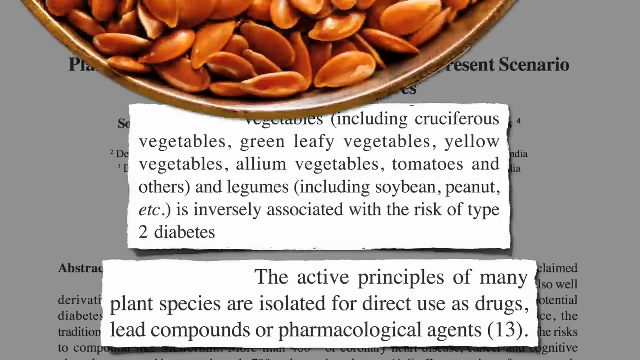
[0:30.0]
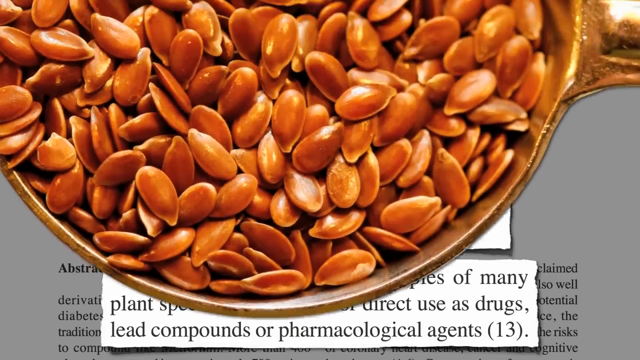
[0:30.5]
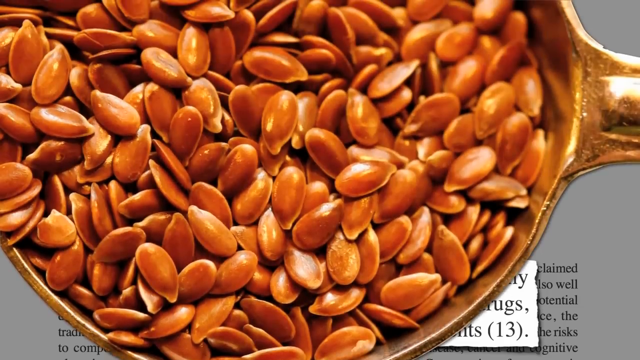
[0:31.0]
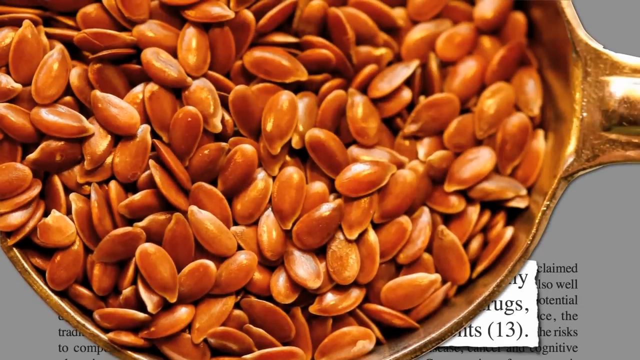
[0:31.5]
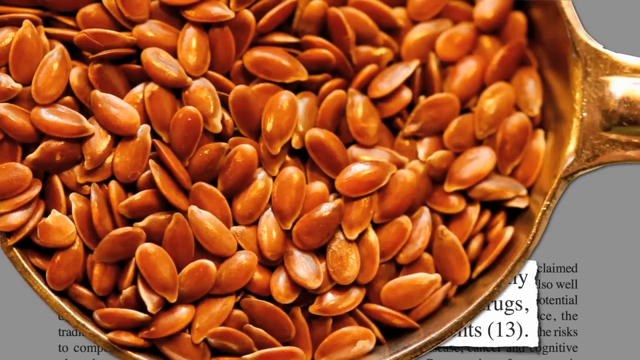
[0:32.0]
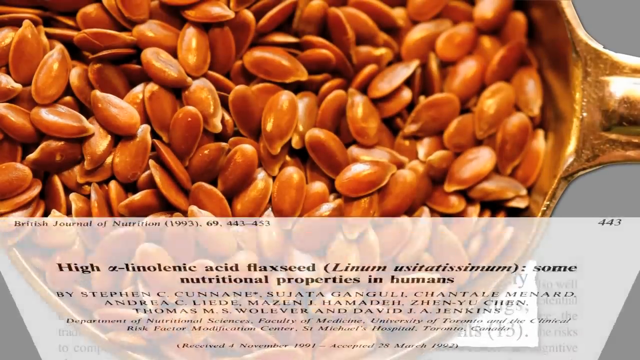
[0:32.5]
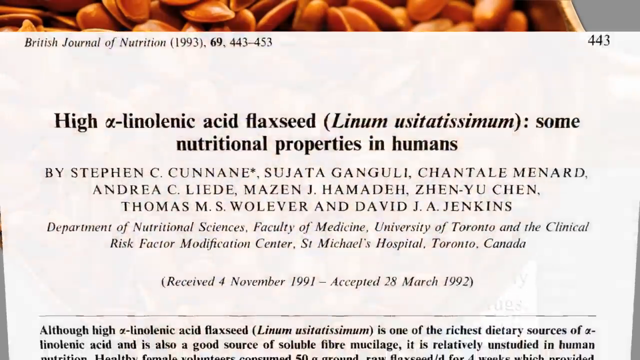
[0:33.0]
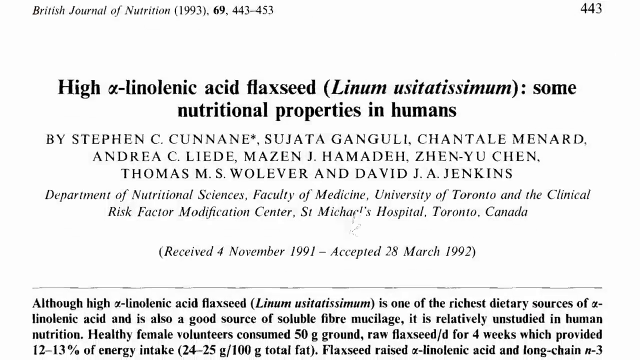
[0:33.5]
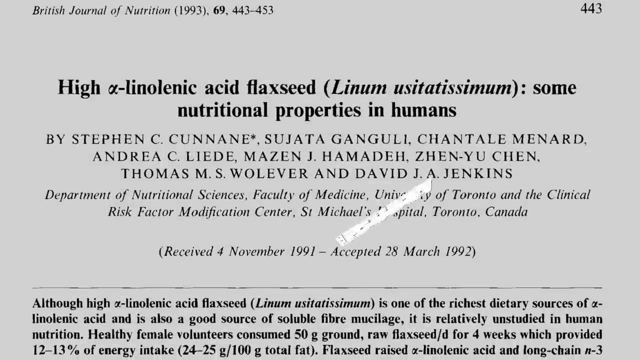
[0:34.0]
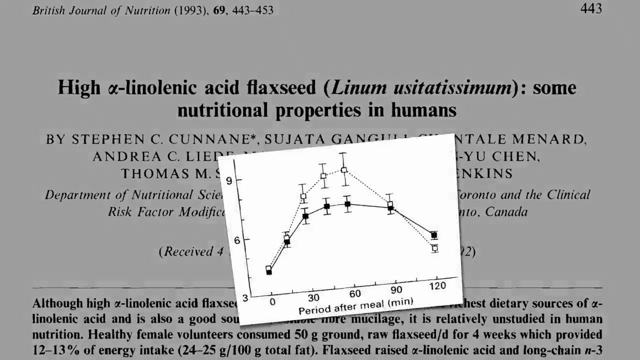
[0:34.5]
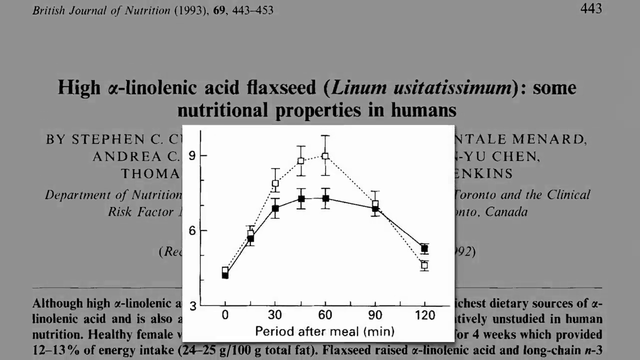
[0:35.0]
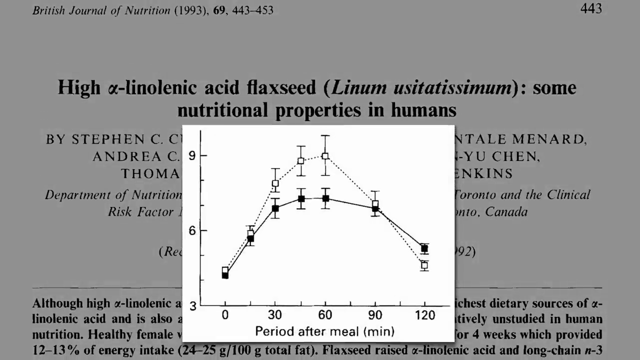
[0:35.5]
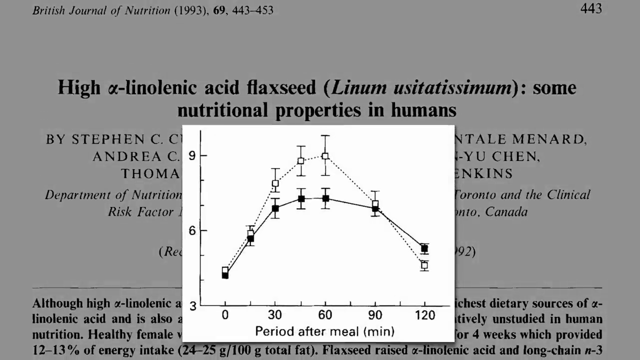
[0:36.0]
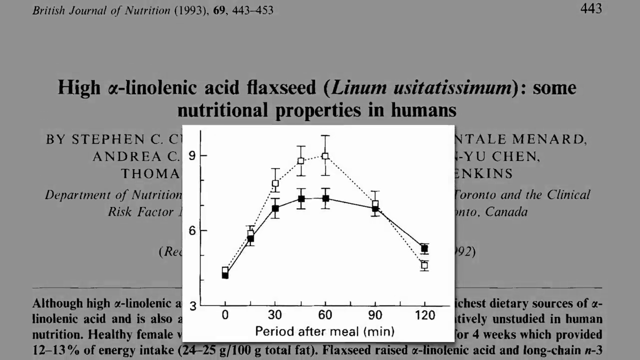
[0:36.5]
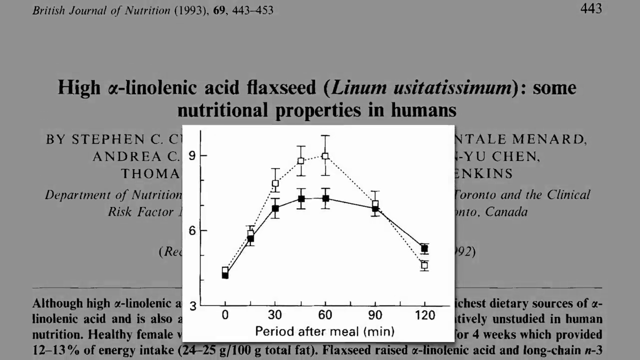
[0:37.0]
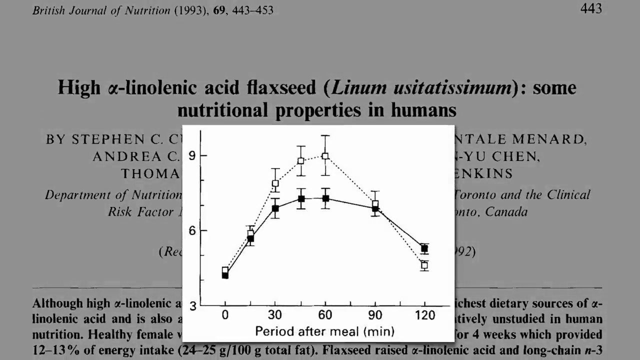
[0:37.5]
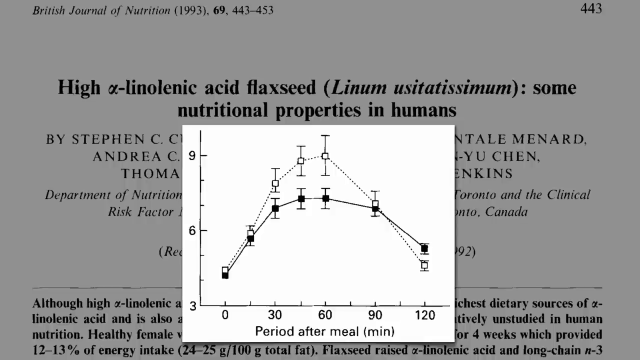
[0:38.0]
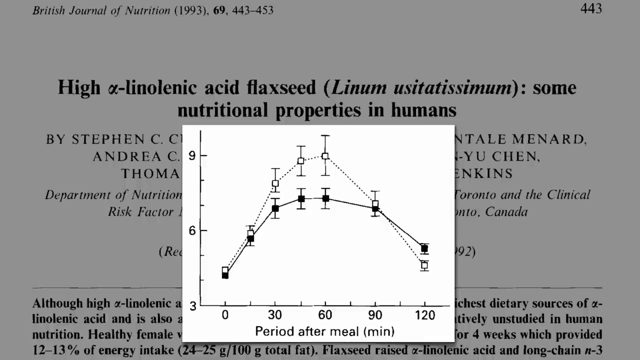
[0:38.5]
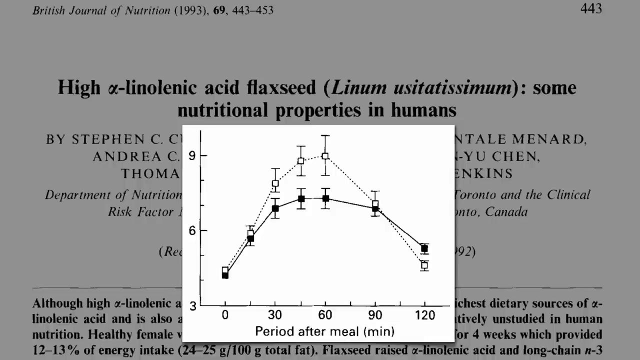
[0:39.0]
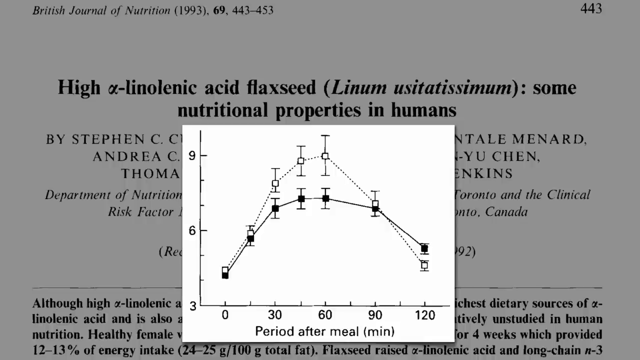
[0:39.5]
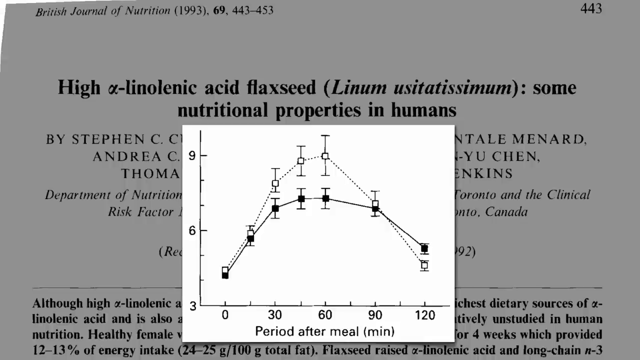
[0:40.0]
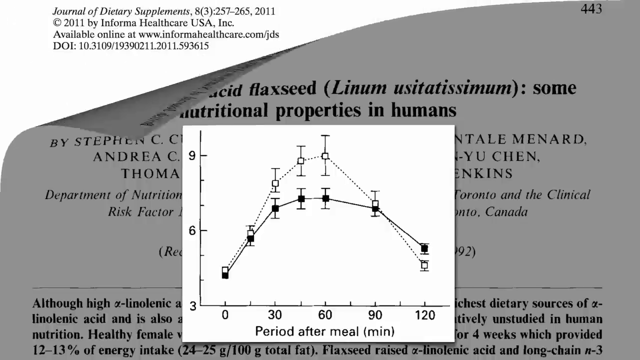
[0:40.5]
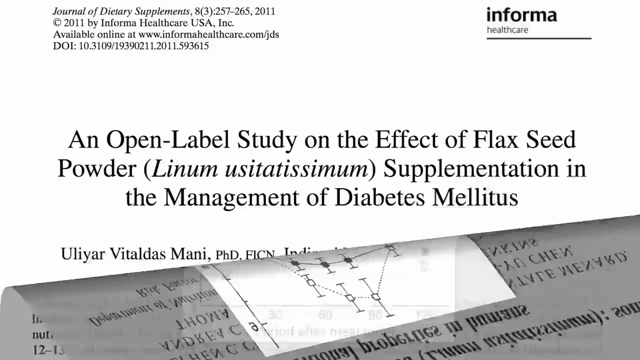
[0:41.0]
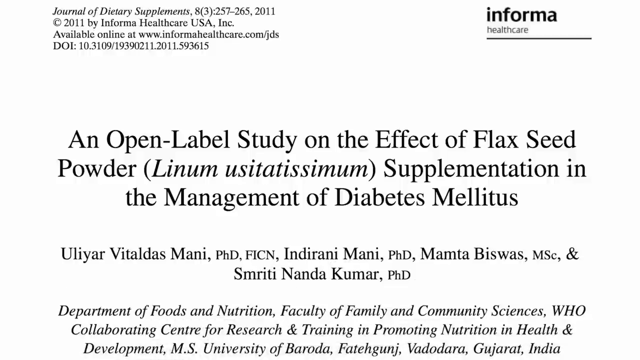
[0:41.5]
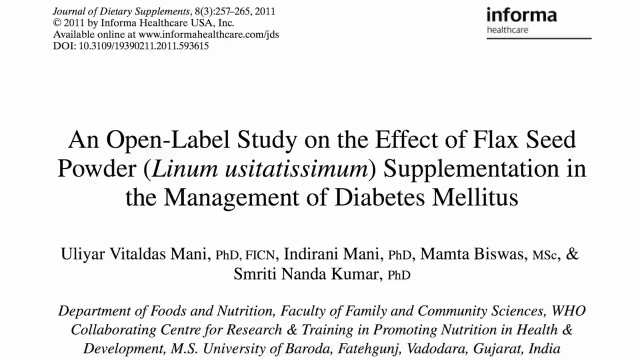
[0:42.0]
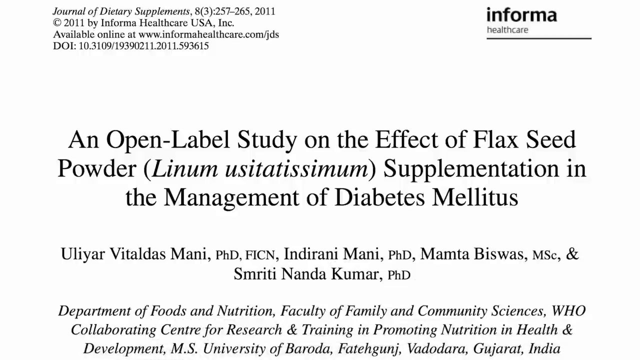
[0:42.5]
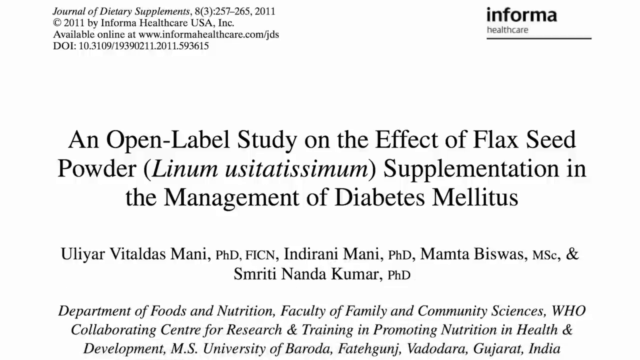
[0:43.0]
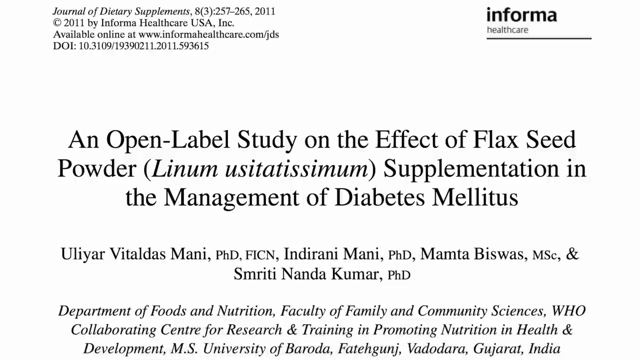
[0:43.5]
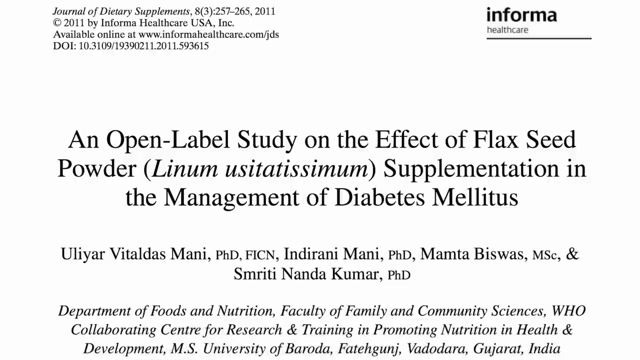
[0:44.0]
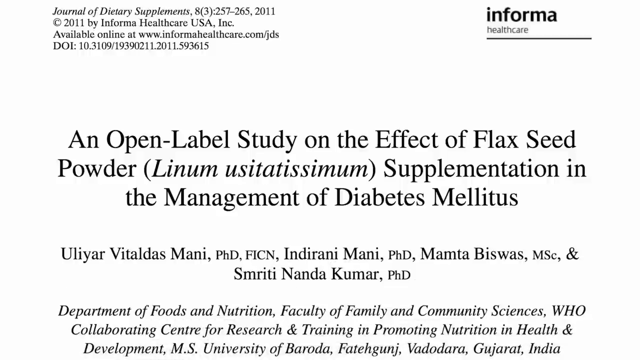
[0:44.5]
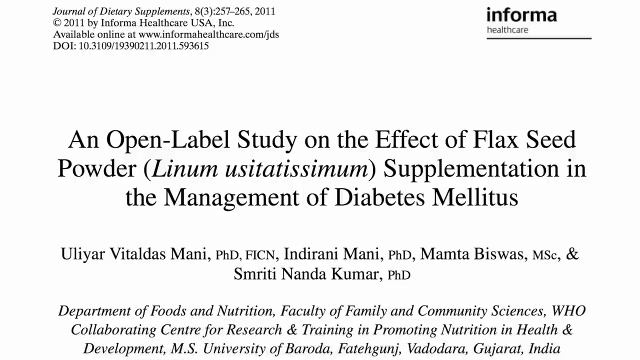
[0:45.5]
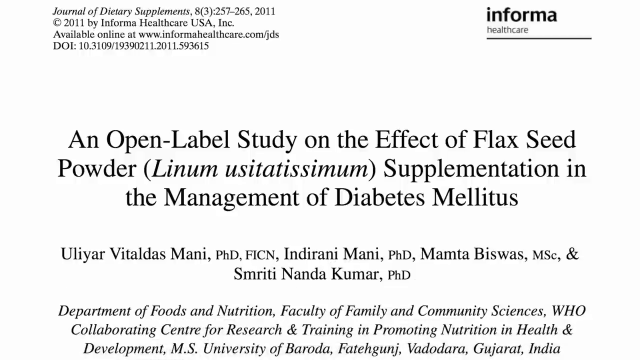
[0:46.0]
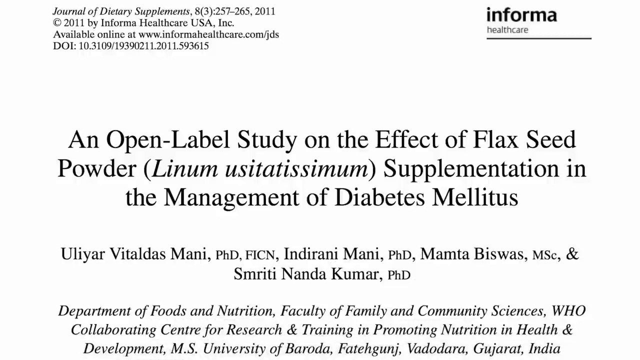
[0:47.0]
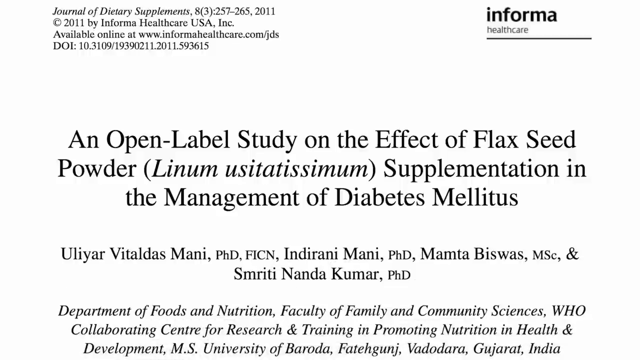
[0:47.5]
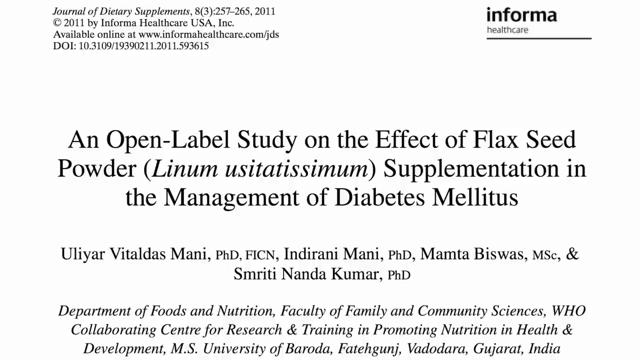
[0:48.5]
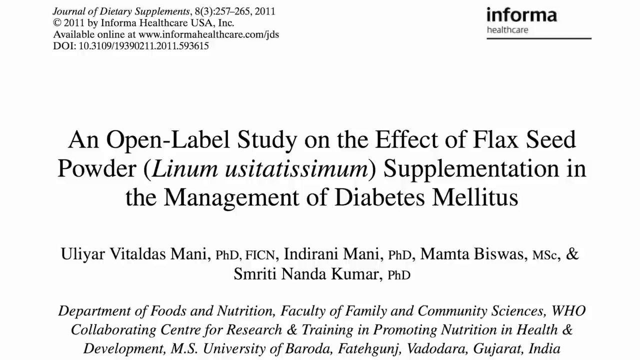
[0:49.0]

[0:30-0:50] What looks like a bowl of pumpkin seeds is partially visible at the top of the frame. The seeds are brownish-orange and sit in a ceramic bowl with a thin border or side. Just below are excerpts from the article. The top excerpt reads "vegetables (including cruciferous vegetables, green leafy vegetables, yellow vegetables, allelium vegetables, tomatoes and others) and legumes (including soybean, peanut, etc.) is inversely associated with the risk of type 2 diabetes." Another excerpt below it reads "the active principles of many plant species are isolated for direct use as drugs, lead compounds". The bowl of seeds then moves down on top of the excerpts. Another article rolls into view from the bottom of the screen, reading "high linoleic acid flaxseed (linum usitatissimum): some nutritional properties in humans". A graph that has something to do with the period of the meal is shown, and then the page rolls down.